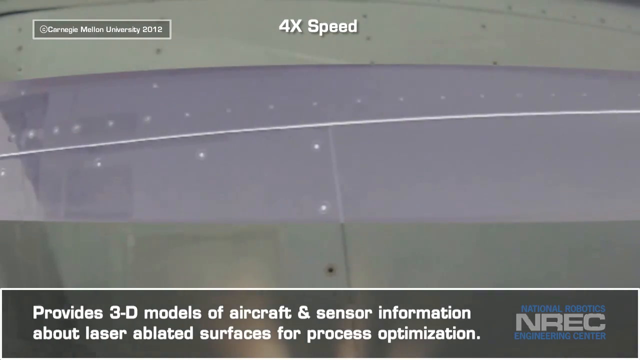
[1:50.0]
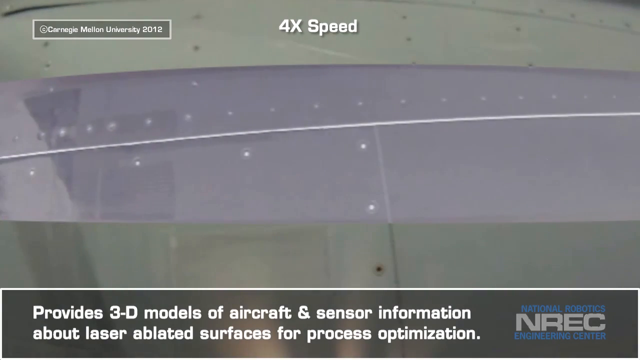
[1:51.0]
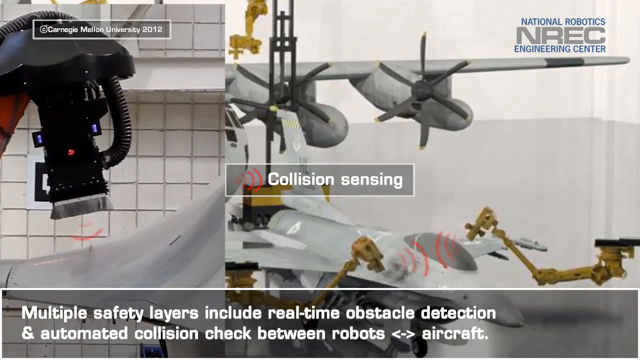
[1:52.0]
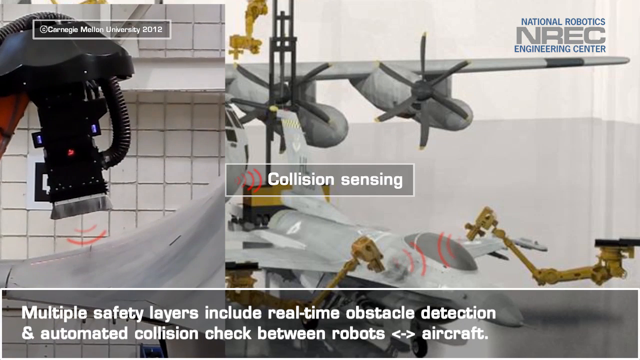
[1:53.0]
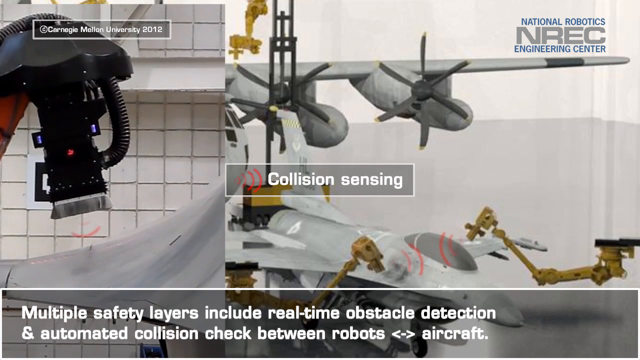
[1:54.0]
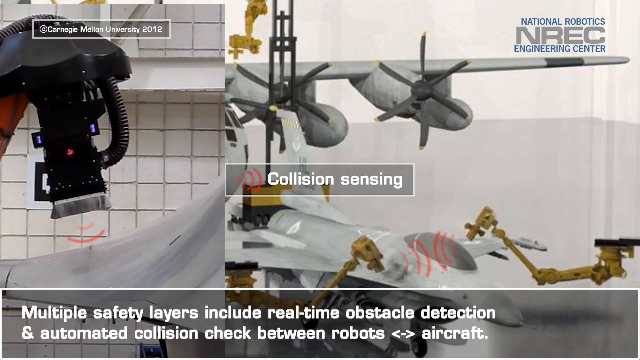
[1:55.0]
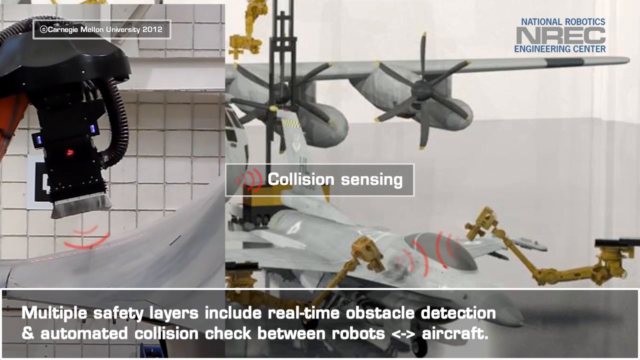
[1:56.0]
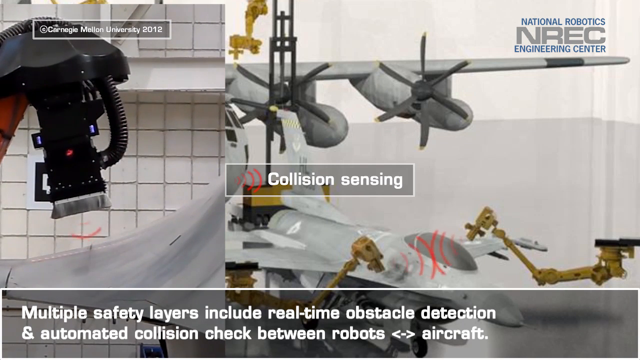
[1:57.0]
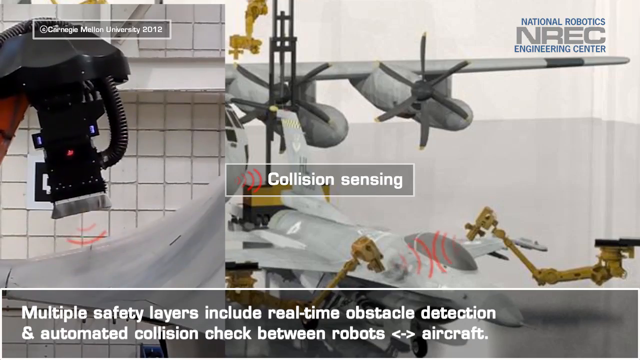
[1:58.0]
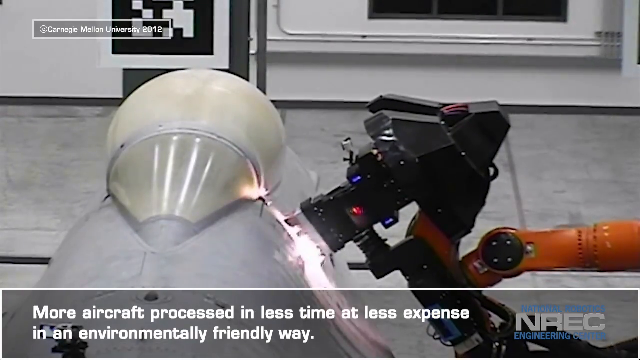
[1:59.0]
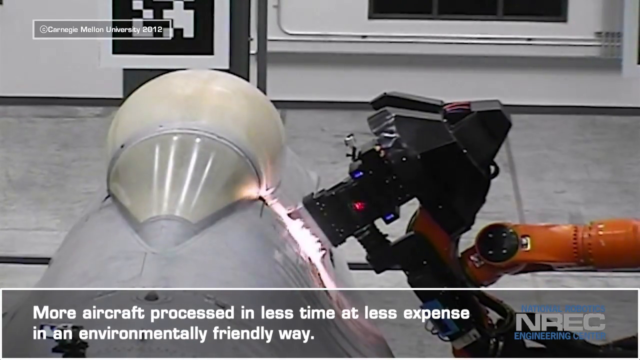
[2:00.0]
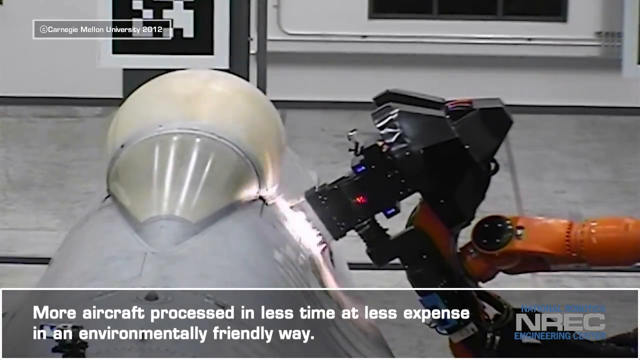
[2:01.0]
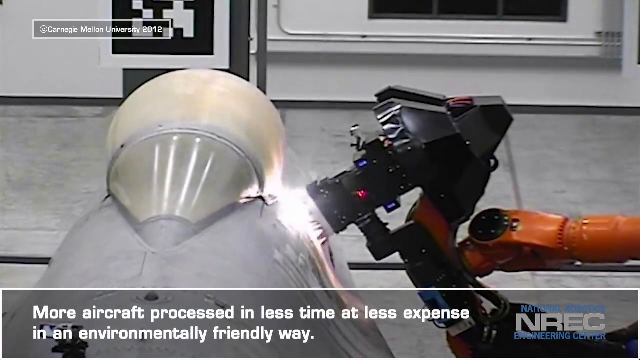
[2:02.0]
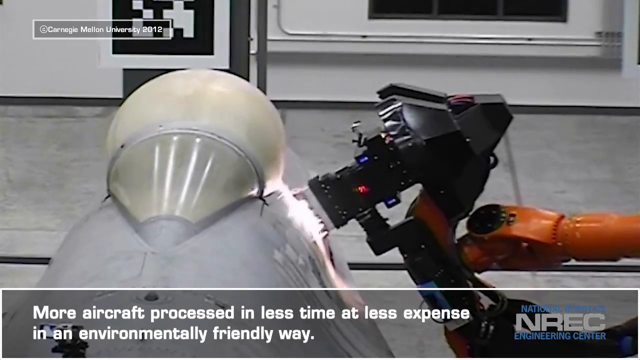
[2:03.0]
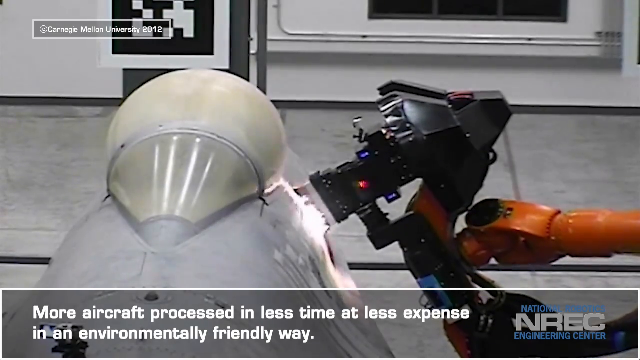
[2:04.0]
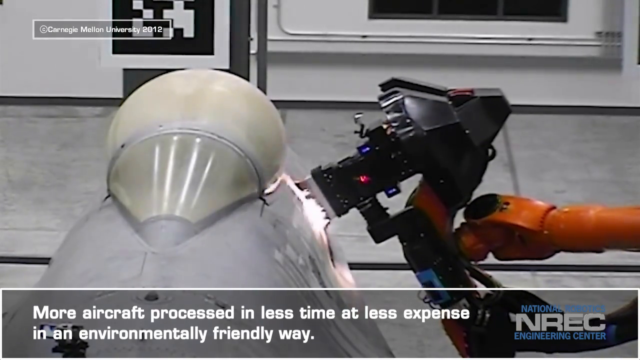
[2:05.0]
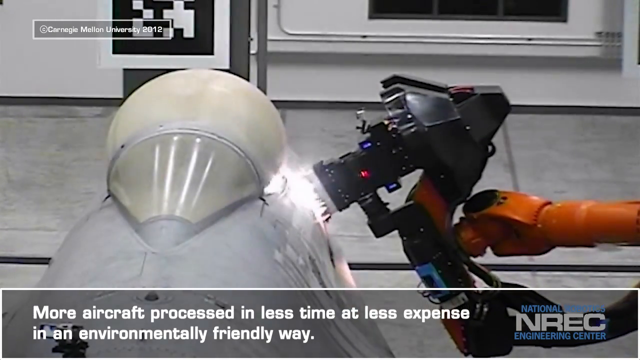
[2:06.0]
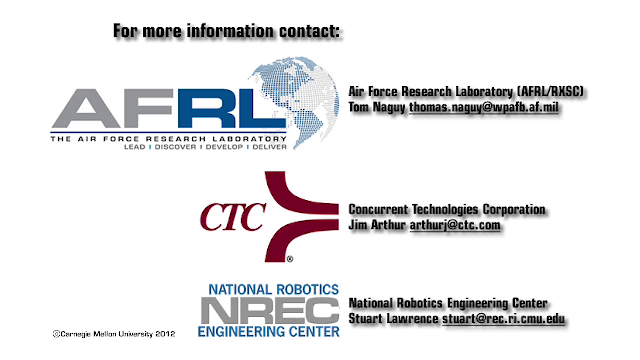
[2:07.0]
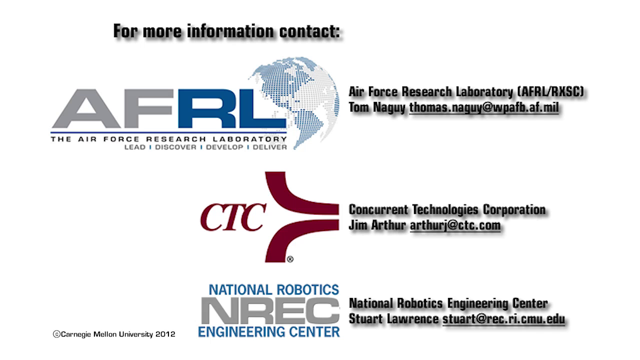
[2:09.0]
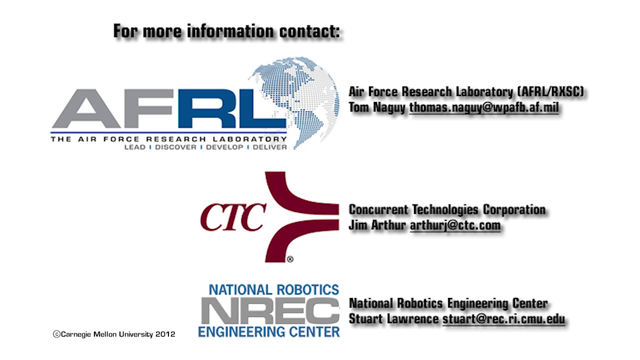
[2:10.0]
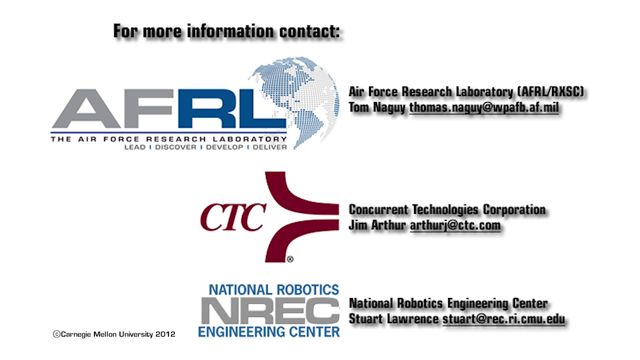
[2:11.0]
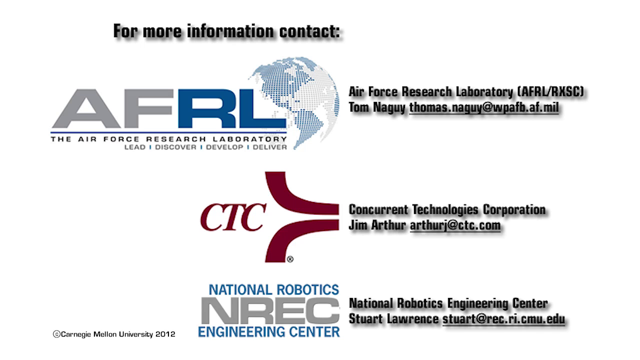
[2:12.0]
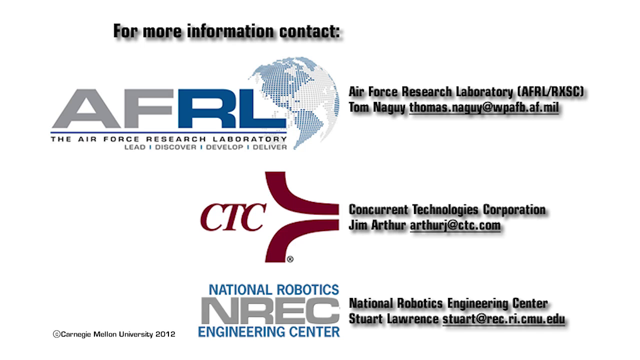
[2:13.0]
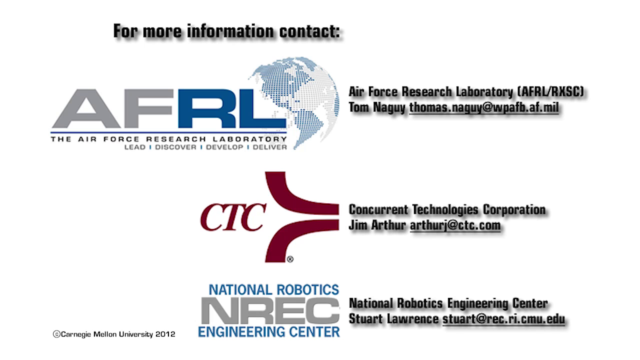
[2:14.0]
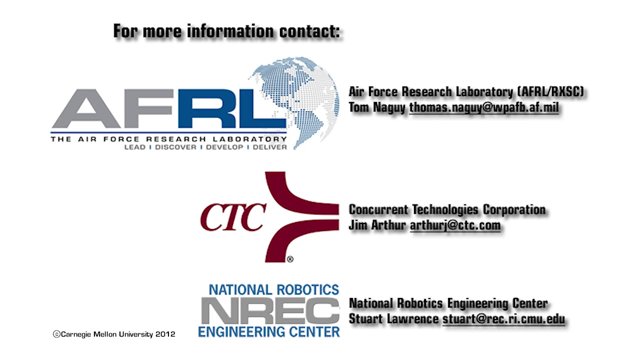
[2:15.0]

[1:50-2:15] The model plane's restoration process with the robot continues. On a computer screen, bold white text reads "four times the speed," showing the speed of the operation and the restoration process. Below, bold white text reads "It provides 3D models of aircraft and sensor information about the laser abated surfaces." A split screen then shows two images of two different processes; on the right are the rotors of the plane and the arm coming down on top of the plane during restoration. Text reads "Multiple safety layers include real-time obstacle detection" and "more aircraft process and less time at less expense in an environmentally friendly way."